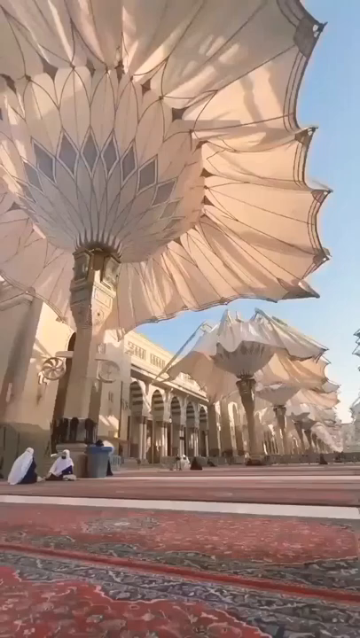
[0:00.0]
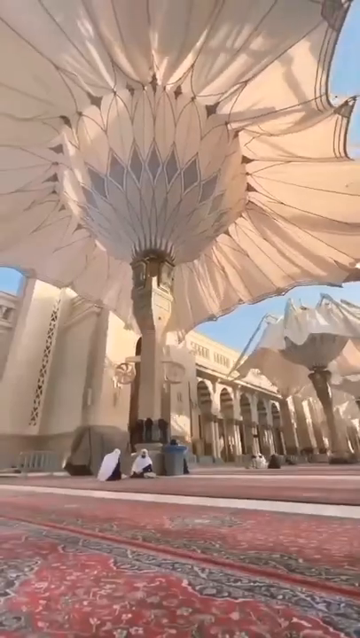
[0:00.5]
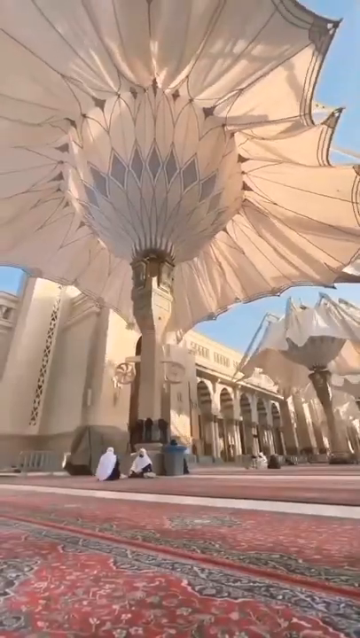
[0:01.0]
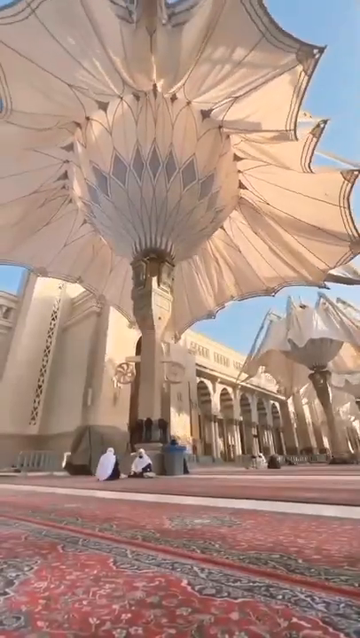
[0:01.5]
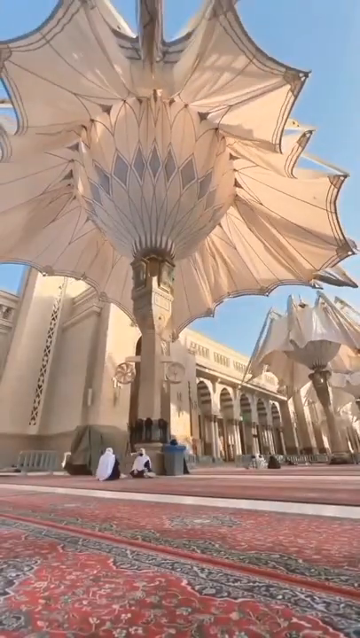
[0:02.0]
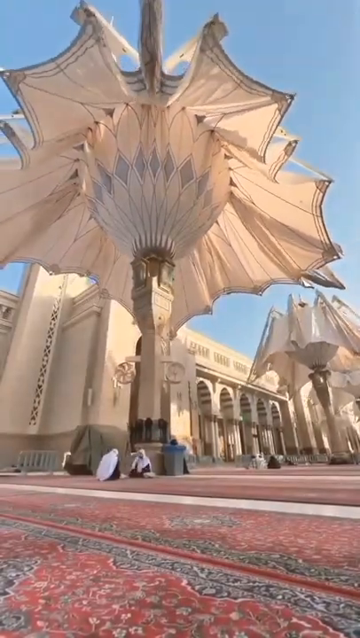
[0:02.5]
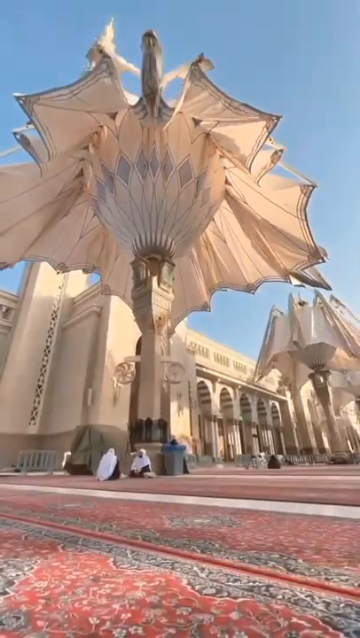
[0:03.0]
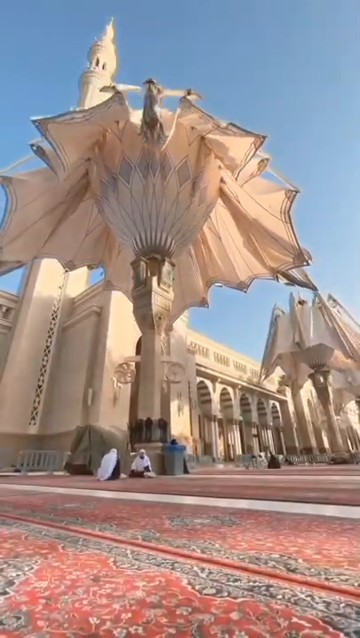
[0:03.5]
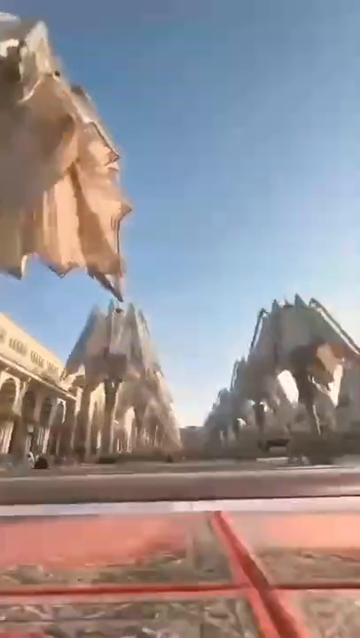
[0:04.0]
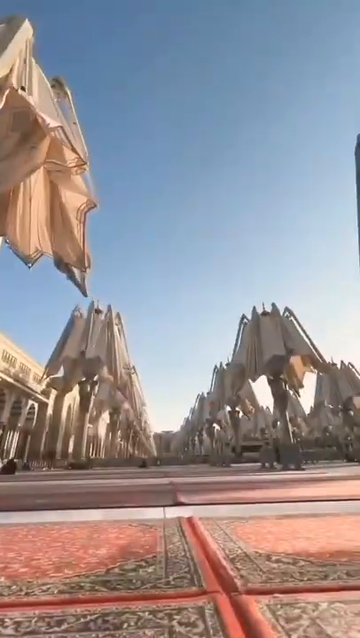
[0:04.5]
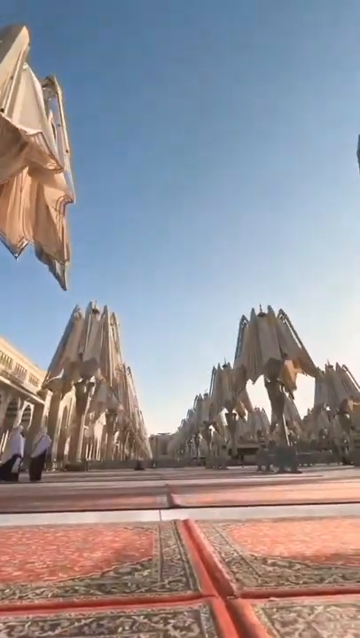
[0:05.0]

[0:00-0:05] Two women, apparently wearing burkas, are in front of a large structure with many domes. The area is filled with very ornate, unidentified structures that look somewhat like umbrellas or flowers: each has a base like a column, then rises like a flower with petal-like parts, and folds into itself, contracting like a flower closing. There are rows and rows of them, possibly hundreds, in this outdoor place, and they seem to be there to provide shade from the sun. The whole section is carpeted, and there are benches all around. There may be more people in the background; a man and some women move along it. The women are underneath these ornate canopies. The place might be outside a mosque or some sort of religious site, and it looks like it is somewhere in the Middle East.